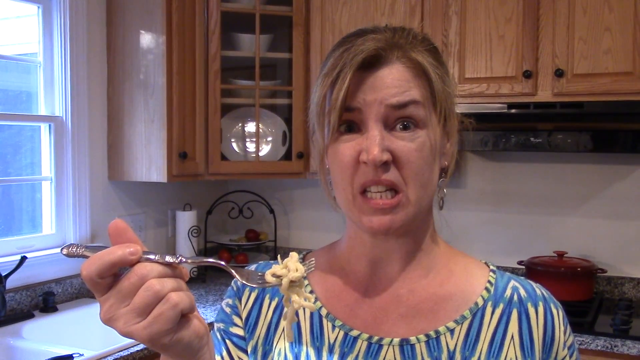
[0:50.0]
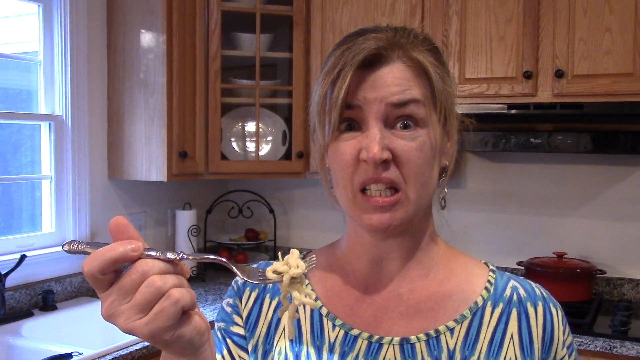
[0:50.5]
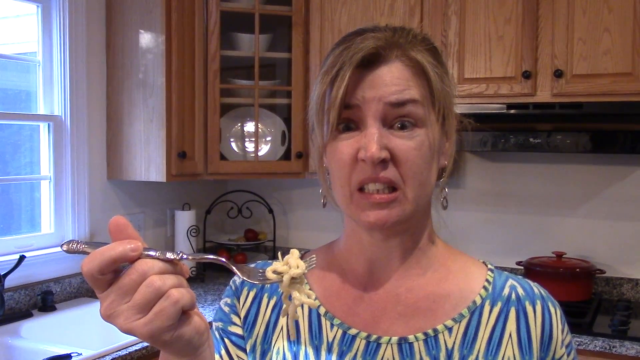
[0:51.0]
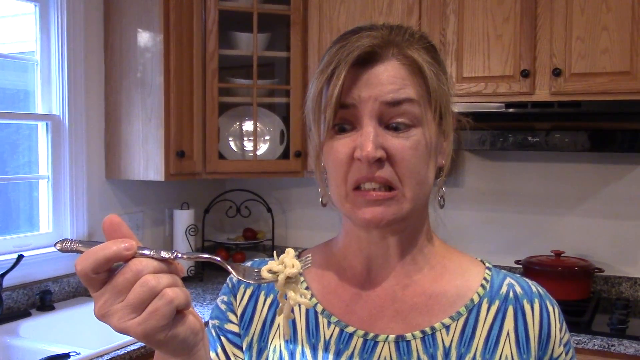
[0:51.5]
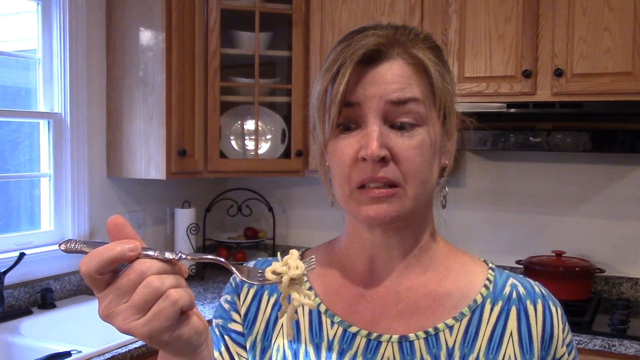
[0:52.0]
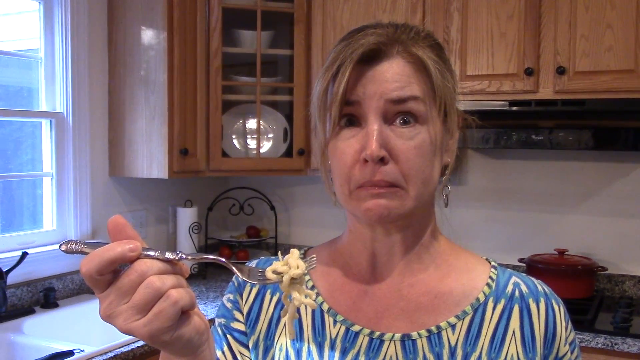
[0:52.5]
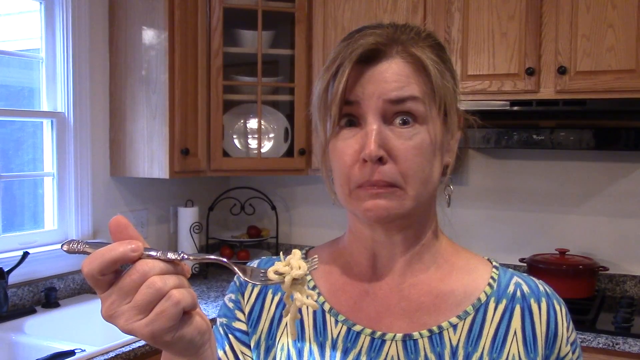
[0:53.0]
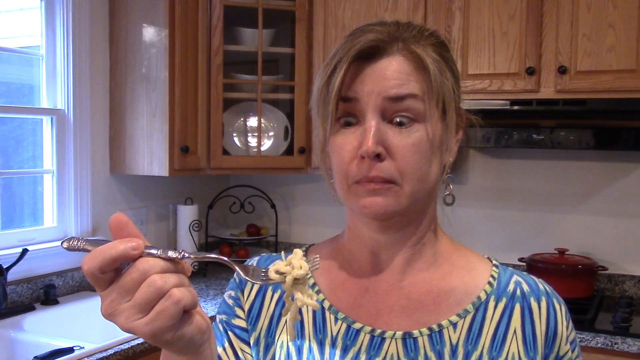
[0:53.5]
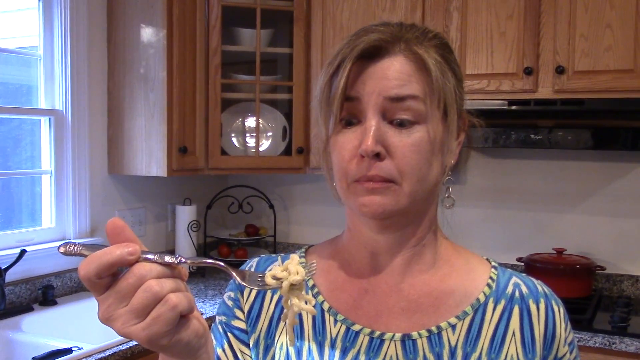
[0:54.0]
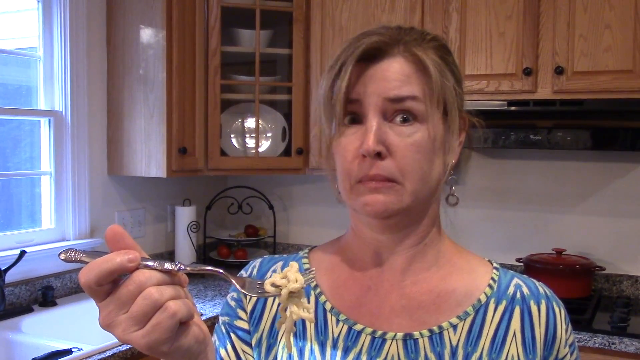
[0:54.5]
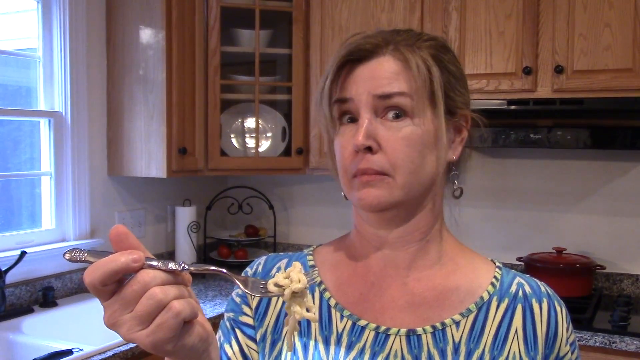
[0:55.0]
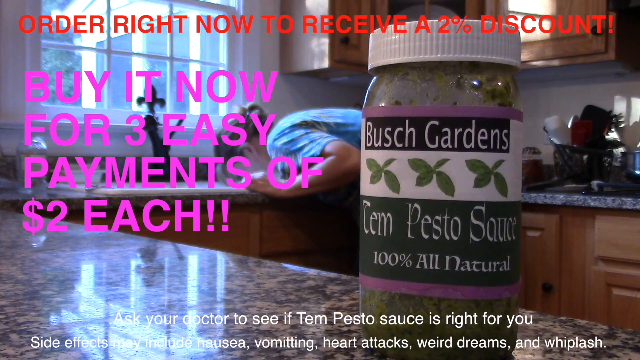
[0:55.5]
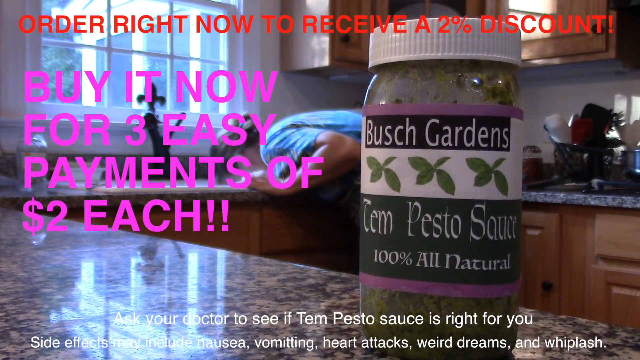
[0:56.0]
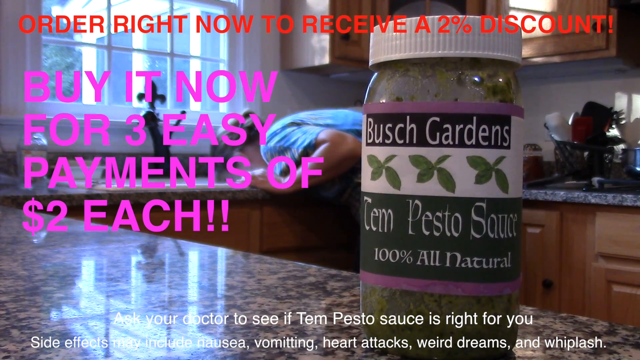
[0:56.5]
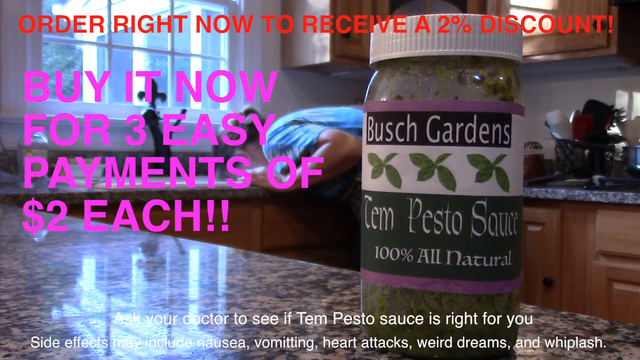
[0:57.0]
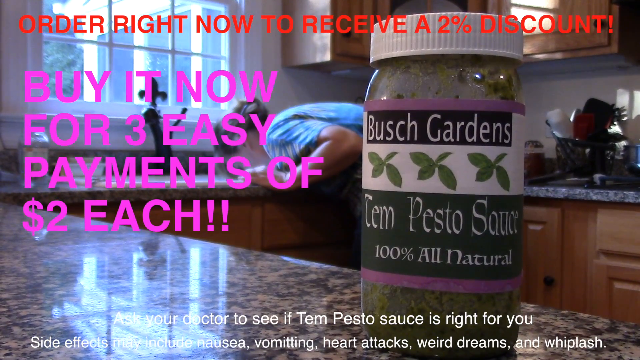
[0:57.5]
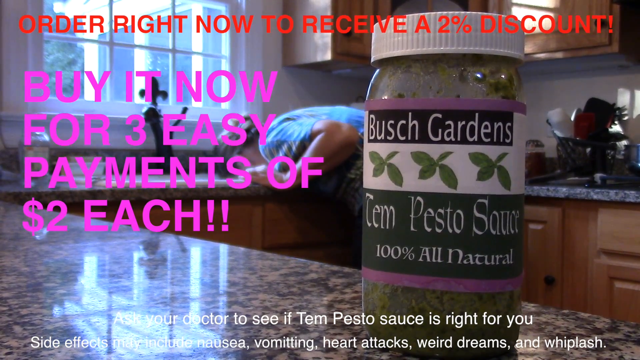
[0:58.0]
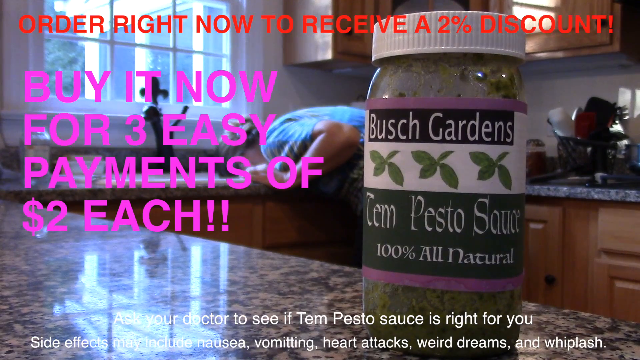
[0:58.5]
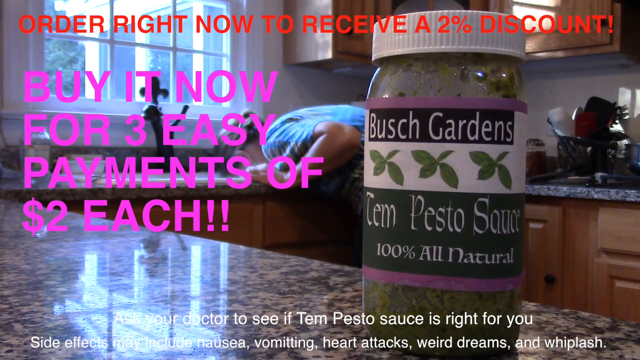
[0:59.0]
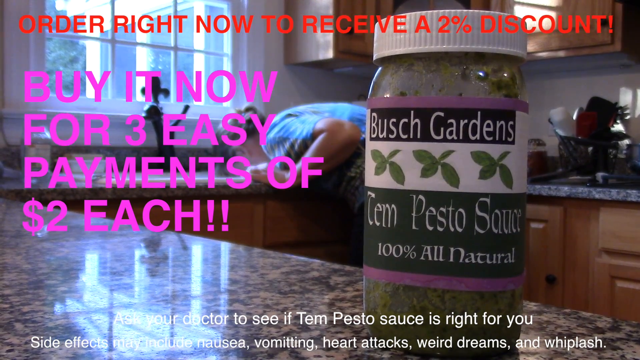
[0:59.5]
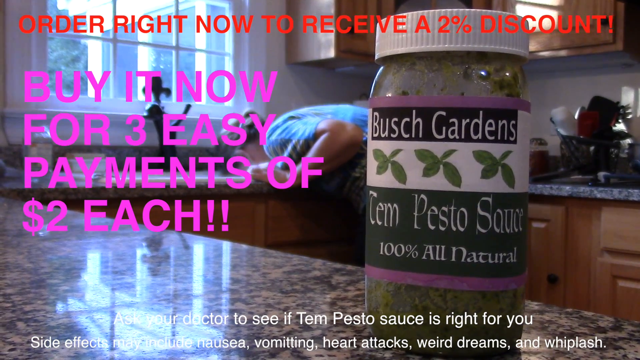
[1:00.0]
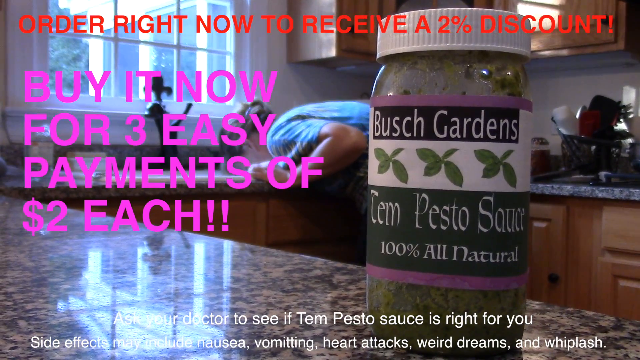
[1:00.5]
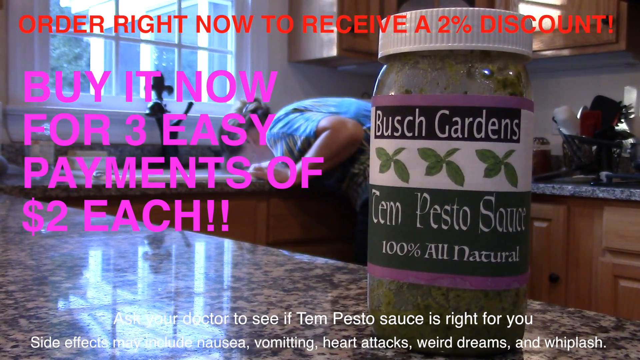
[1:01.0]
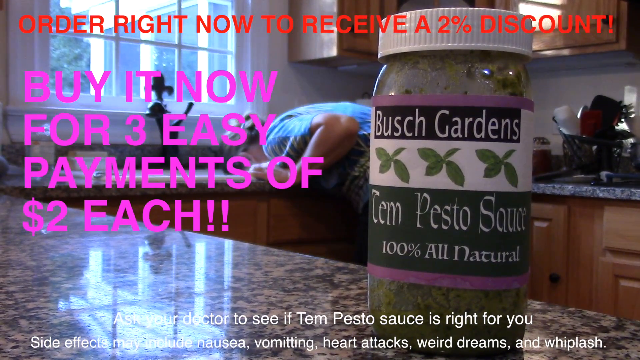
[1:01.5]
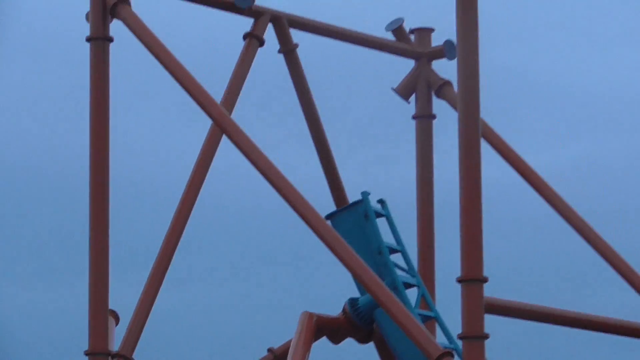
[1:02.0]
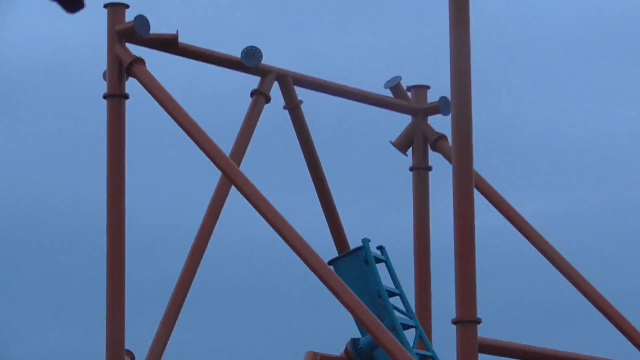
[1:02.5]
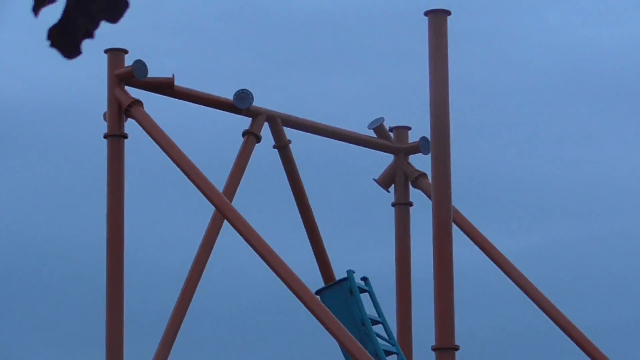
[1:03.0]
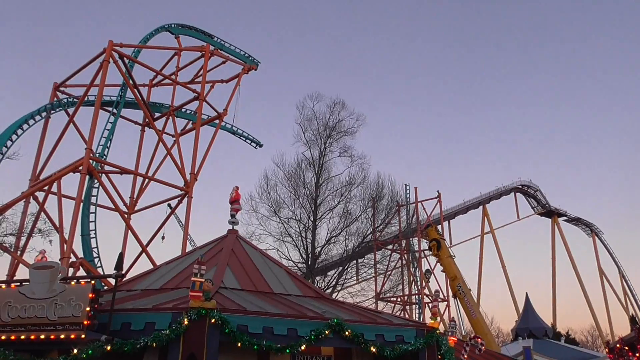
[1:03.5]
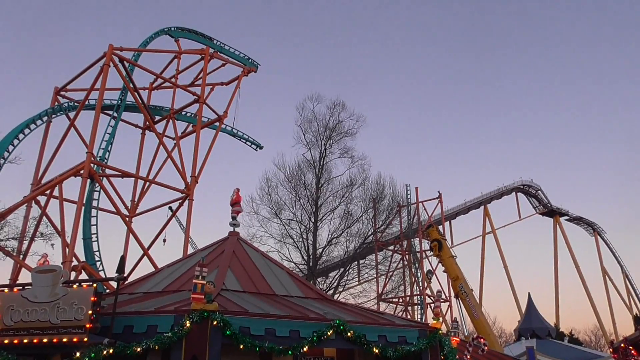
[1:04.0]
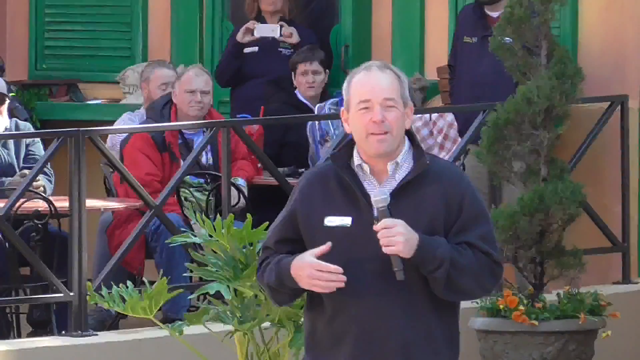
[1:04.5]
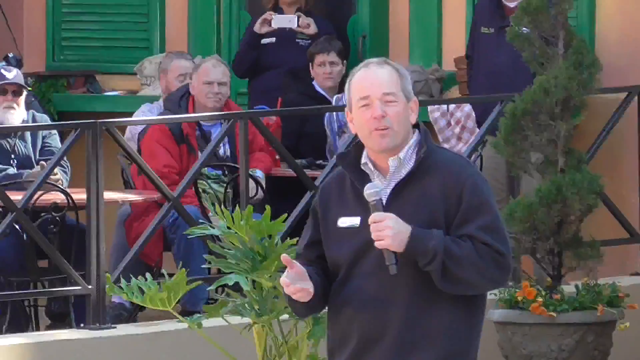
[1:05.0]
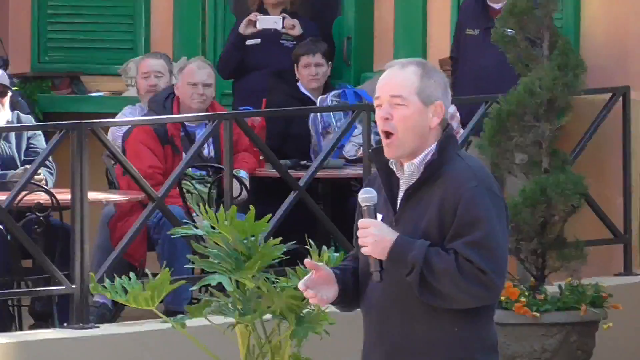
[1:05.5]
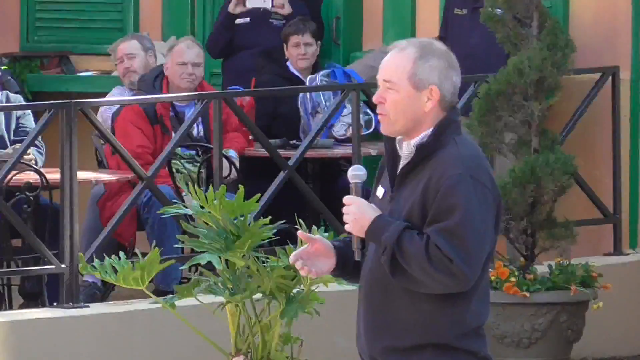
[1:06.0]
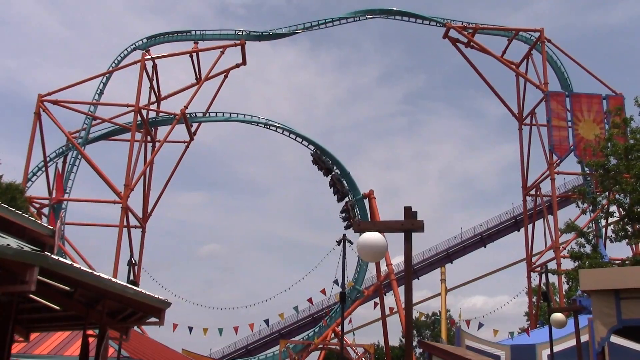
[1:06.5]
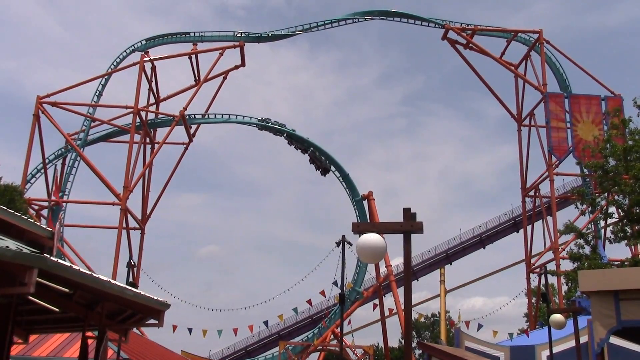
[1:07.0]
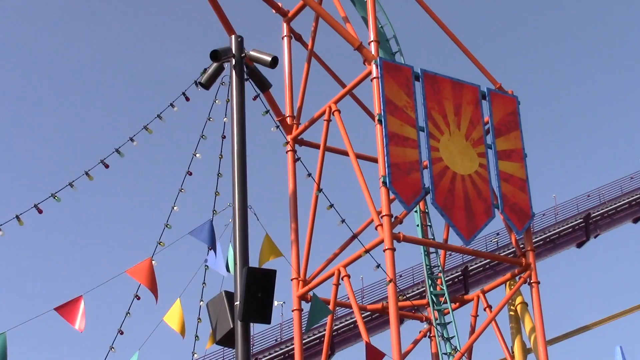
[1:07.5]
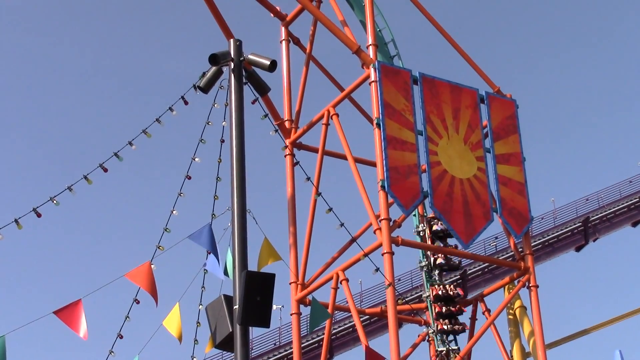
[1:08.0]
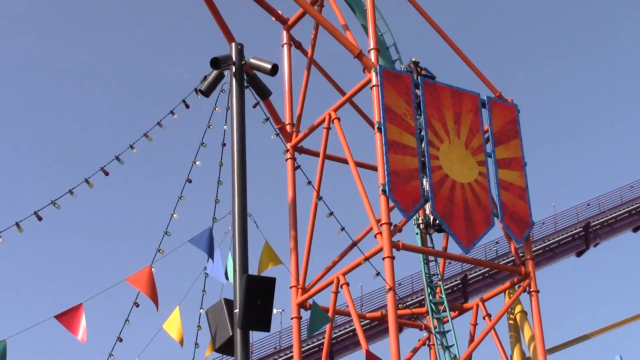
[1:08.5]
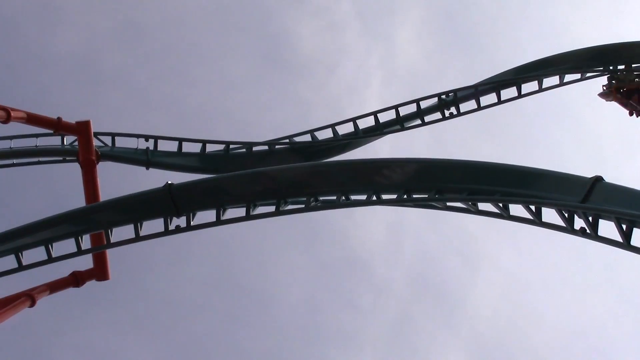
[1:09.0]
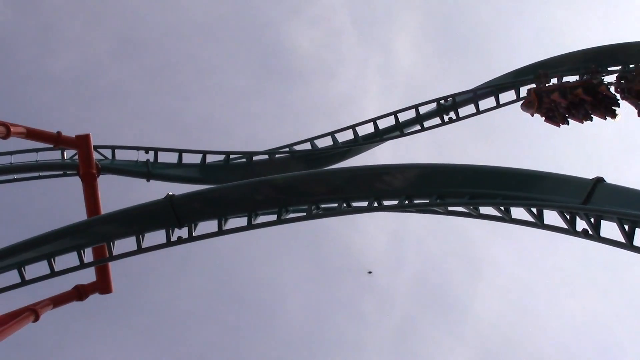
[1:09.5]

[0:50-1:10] The woman in the blue patterned top holds a forkful of pasta, debating whether to eat it, with a look of concern, shaking her head as if she does not want to try it. A panned-out shot shows her bending over the sink, appearing to throw up into it. A close-up shows the jar of Busch Garden pesto sauce resting on the counter, with pink text reading "buy it now for three easy payments of $2 each." The video cuts back to the amusement park, starting with a pan of the scaffolding that supports one of the roller coasters, then a wide shot showing more of the coaster's tracks and how it is laid out. An older white man in a dark gray jacket holds a microphone and speaks, standing in front of a group of people sitting at a table listening to him. The roller coaster goes around a loop-de-loop, followed by a quick cut to more of the scaffolding, which is made of red piping with three banners hanging from its side bearing a graphic of a sun with rays coming out of it. Speakers or light fixtures are on the scaffolding, with wired lights streaming down from them. The roller coaster shoots up almost vertically behind the scaffolding, and then presumably the same roller coaster goes around a twisty section.